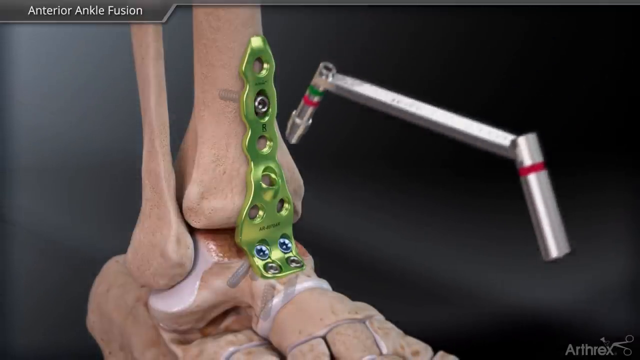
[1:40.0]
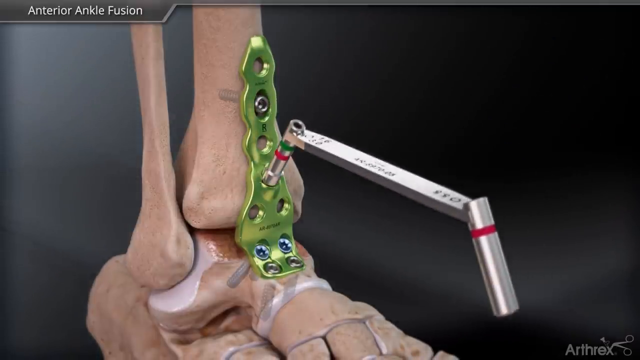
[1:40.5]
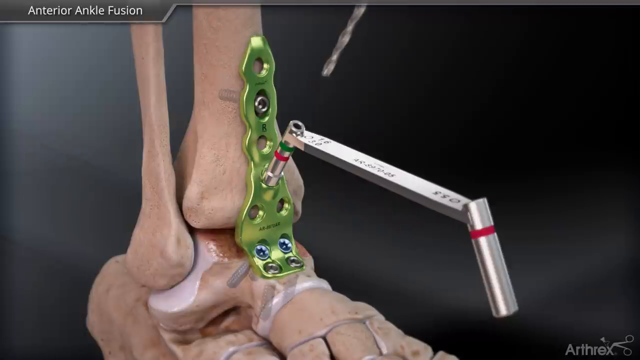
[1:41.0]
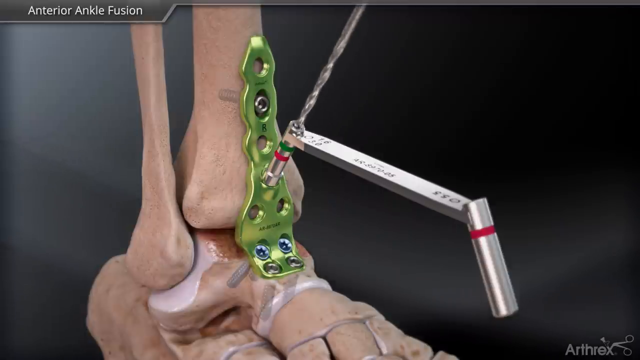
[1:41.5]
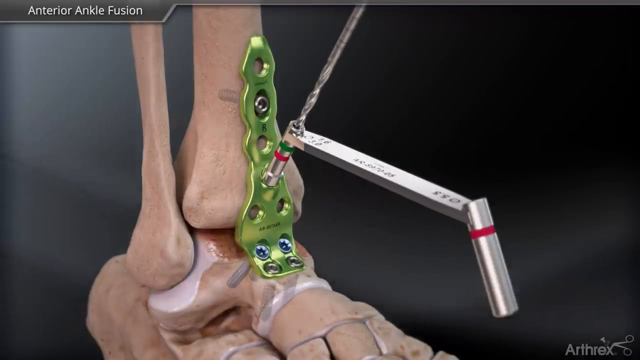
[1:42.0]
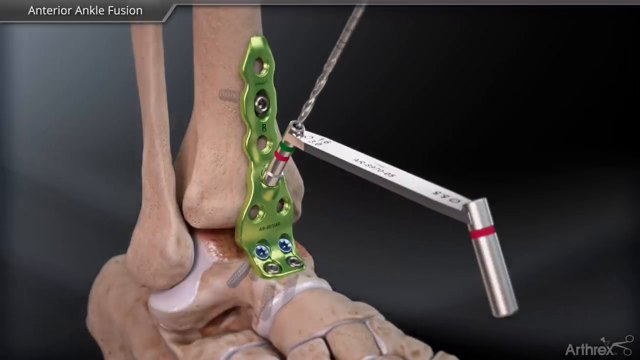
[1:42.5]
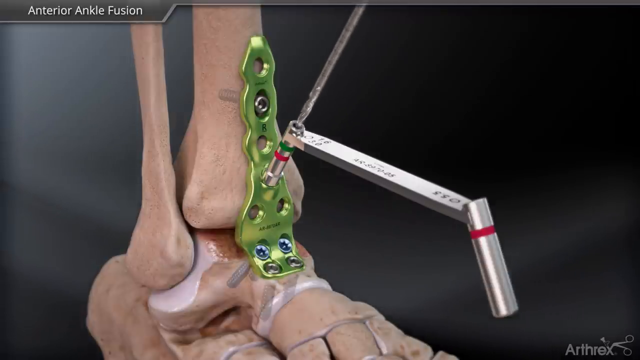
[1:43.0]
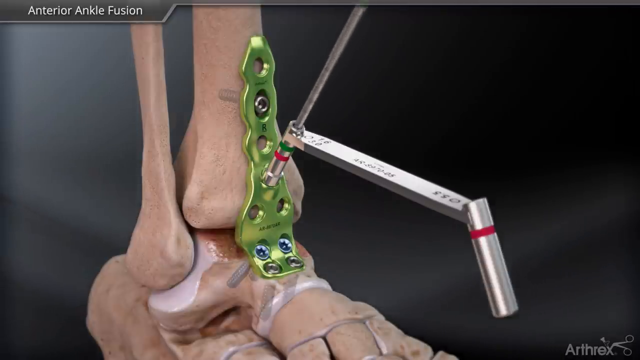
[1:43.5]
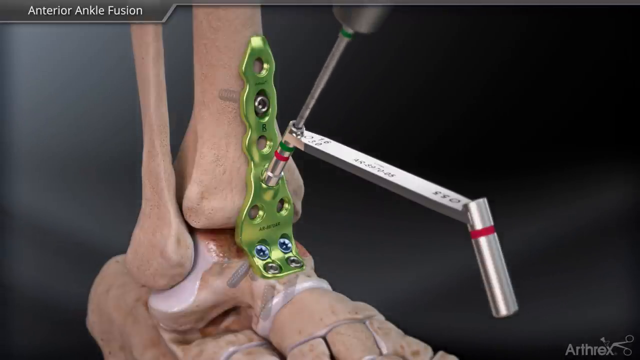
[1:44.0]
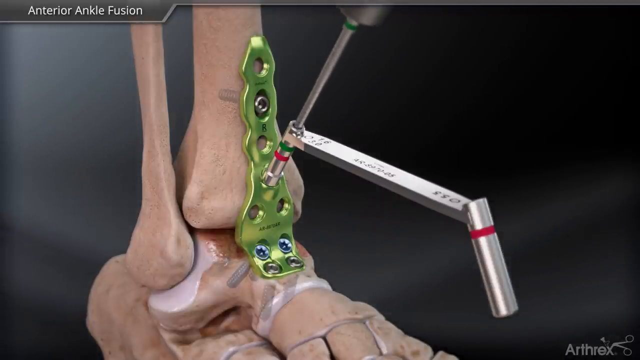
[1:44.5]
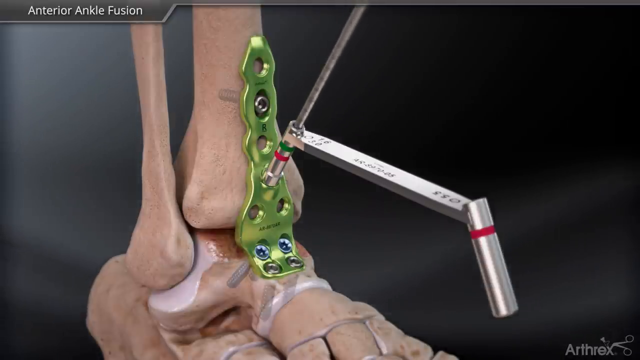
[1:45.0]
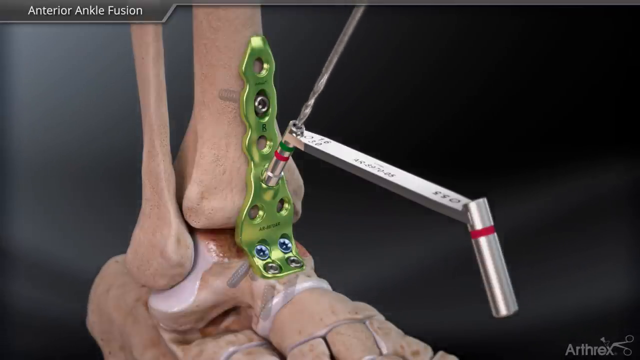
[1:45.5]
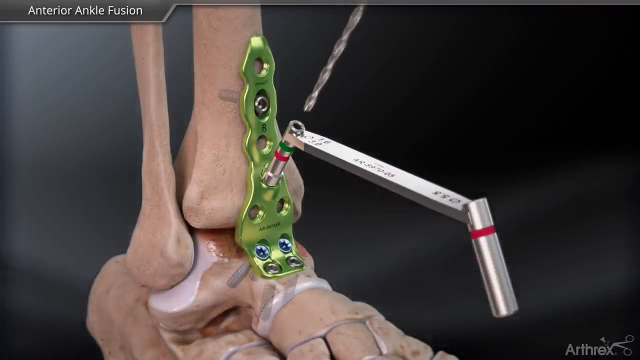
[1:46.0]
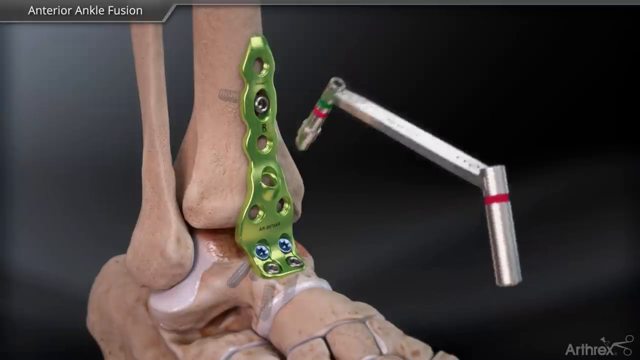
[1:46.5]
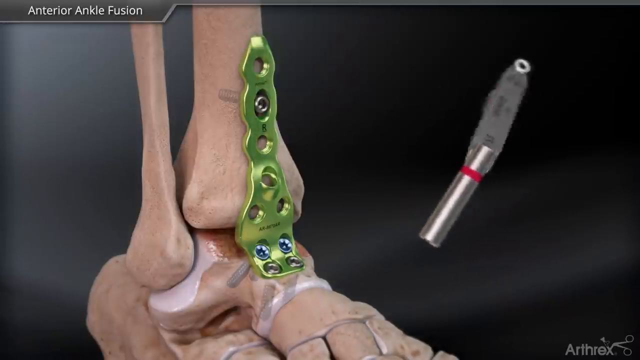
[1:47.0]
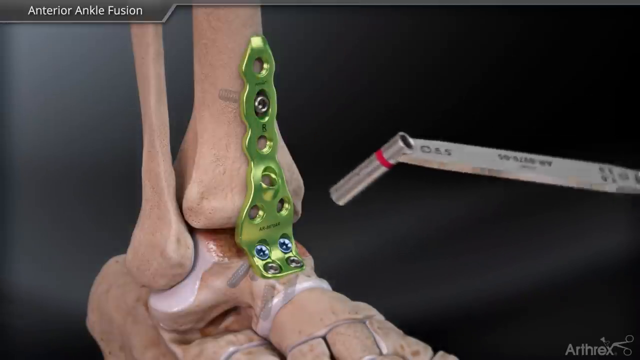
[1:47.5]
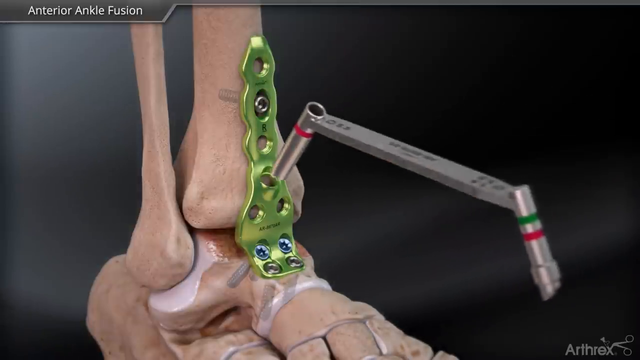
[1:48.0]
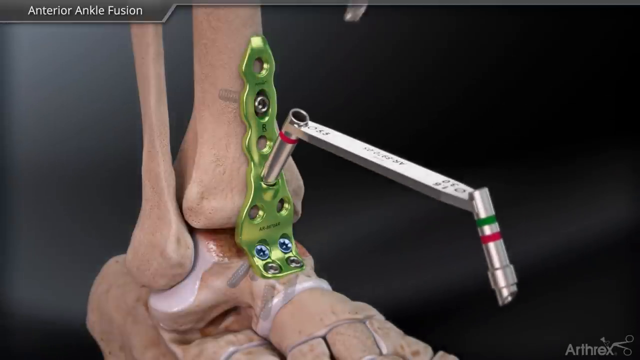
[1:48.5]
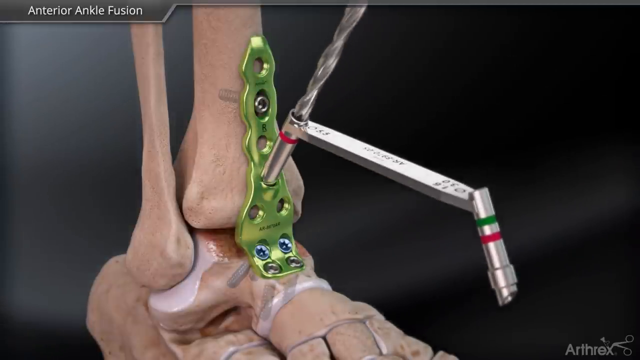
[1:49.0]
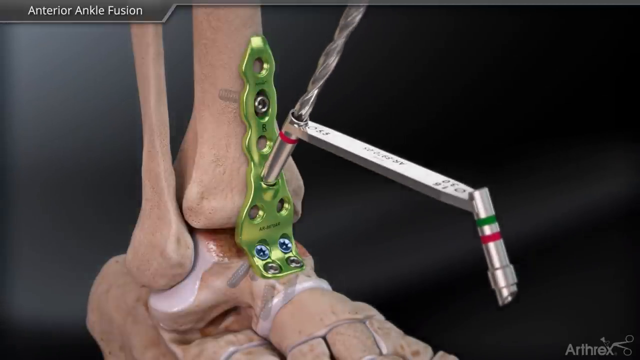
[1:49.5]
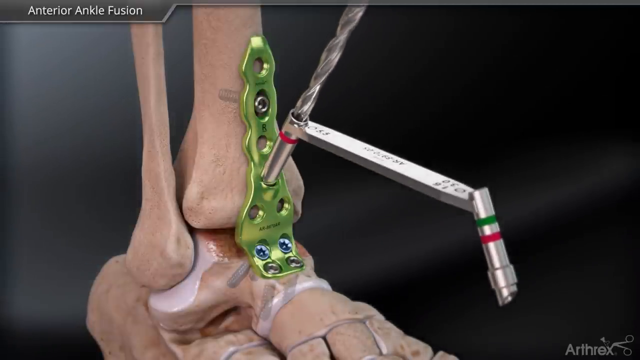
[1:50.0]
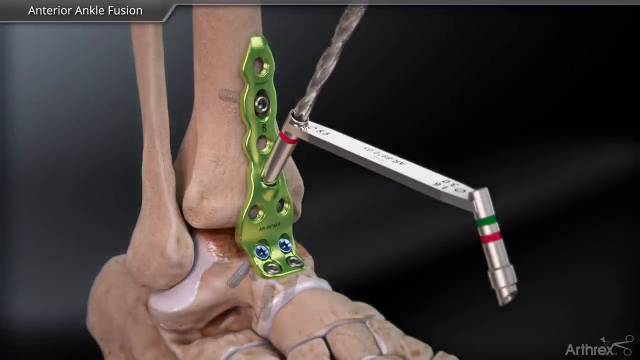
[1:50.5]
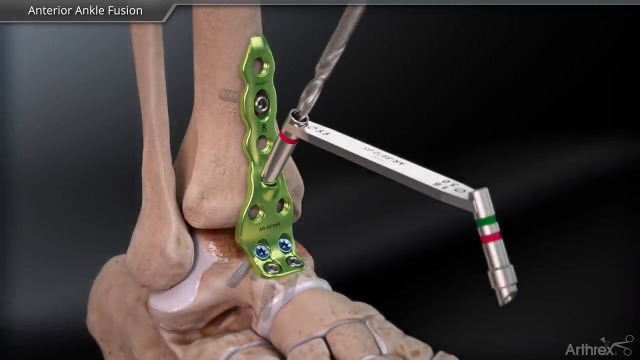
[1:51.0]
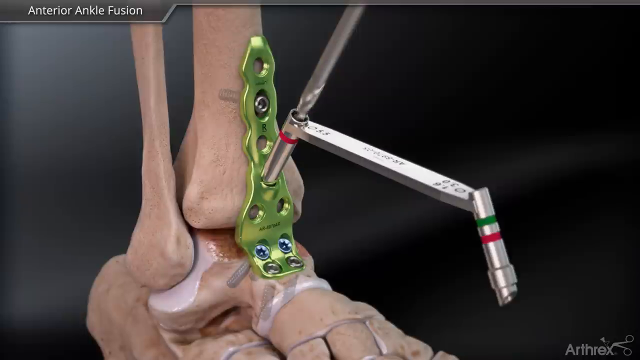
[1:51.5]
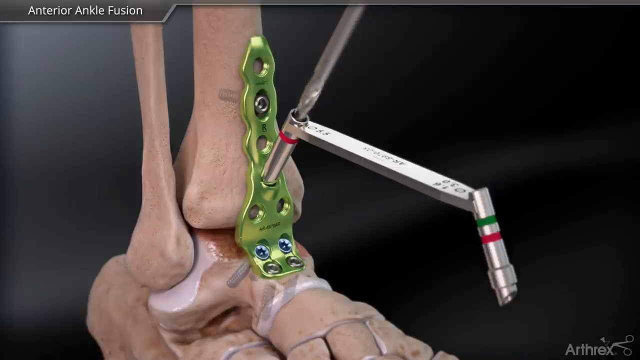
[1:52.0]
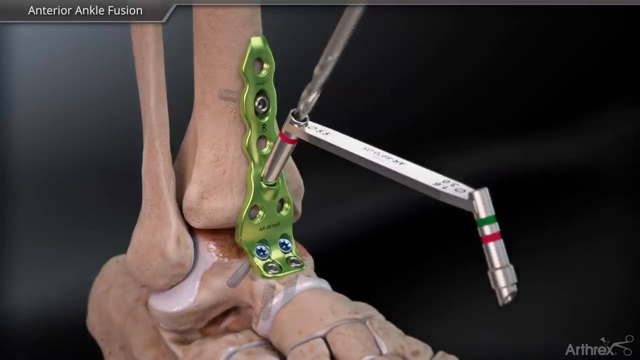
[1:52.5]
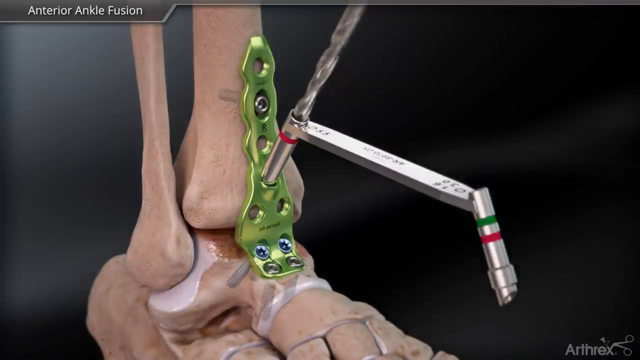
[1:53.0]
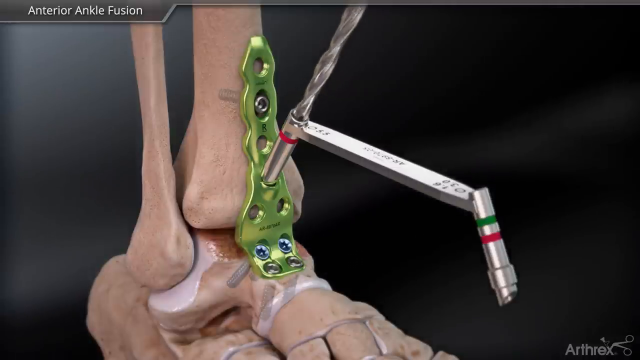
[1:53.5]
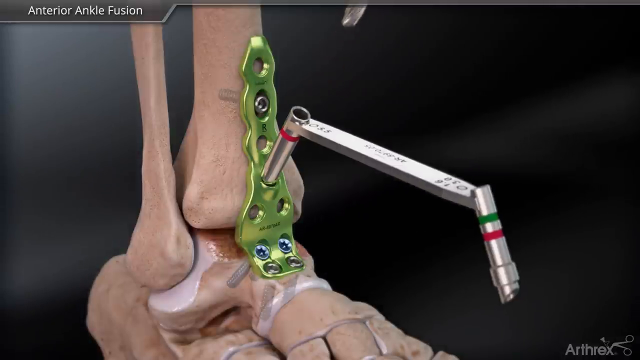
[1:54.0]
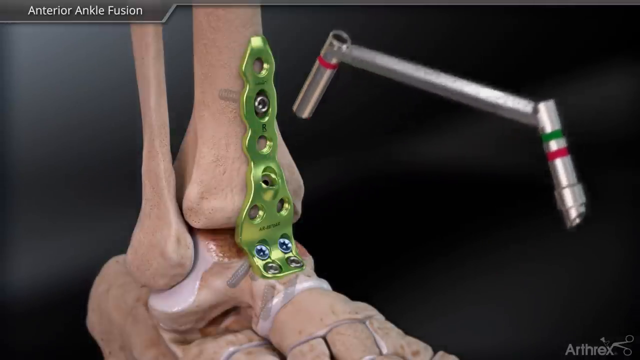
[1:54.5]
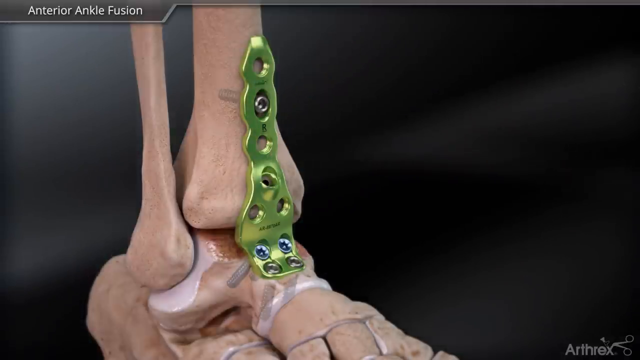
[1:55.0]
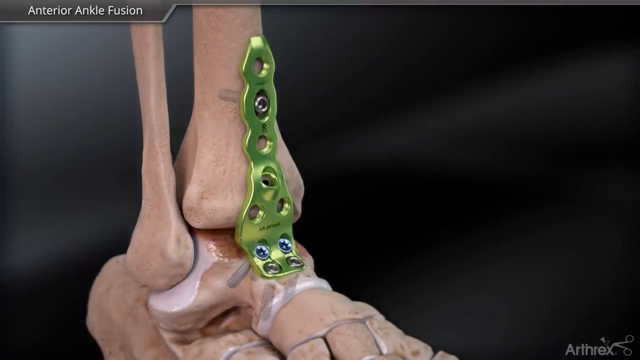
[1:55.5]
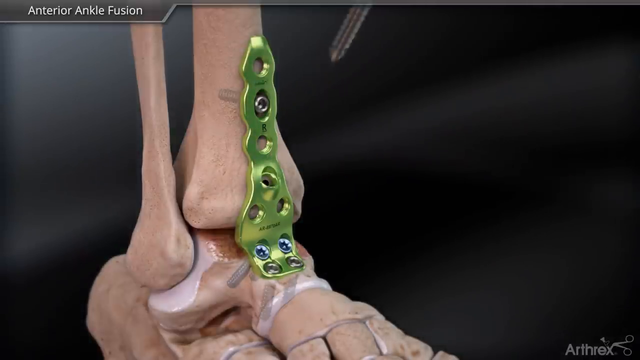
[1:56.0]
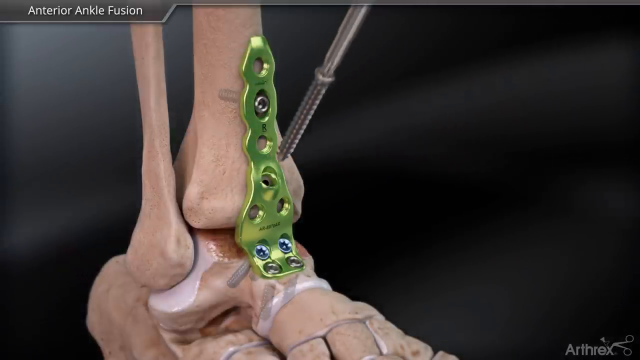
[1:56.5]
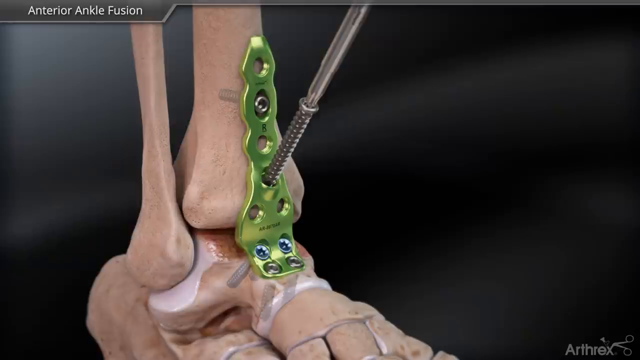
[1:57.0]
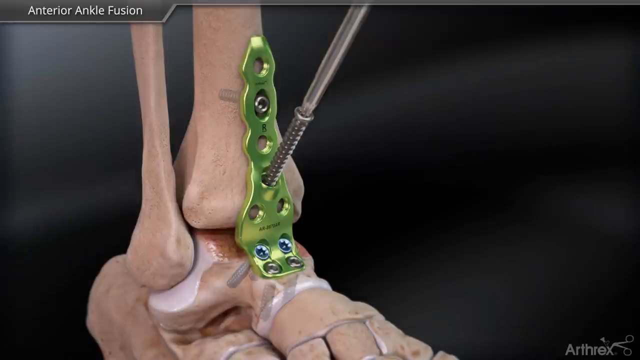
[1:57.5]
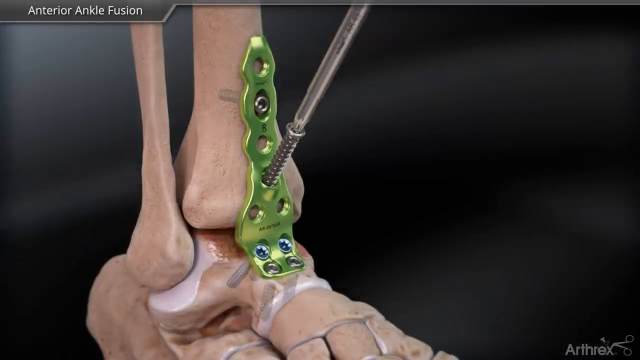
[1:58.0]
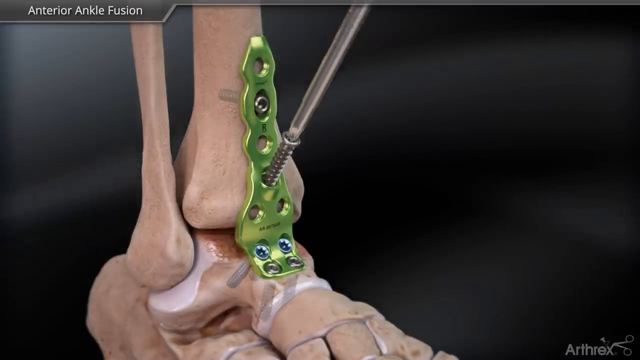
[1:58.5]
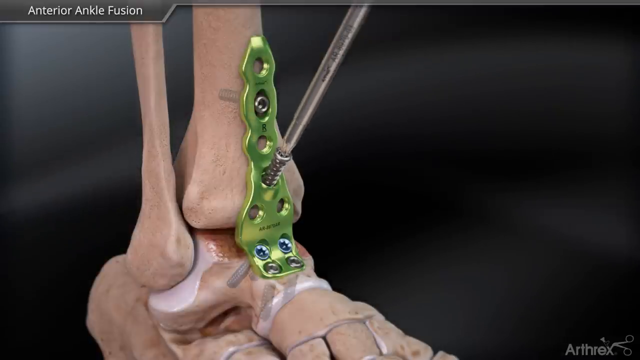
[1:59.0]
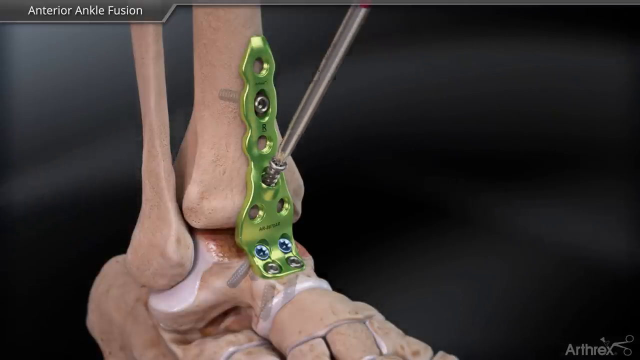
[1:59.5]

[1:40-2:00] The stabilization instrument is inserted into the fourth hole from the top; it seems a section is being skipped, with a screw going into every other hole. Again, the large drill bit is inserted inside the tool that helps stabilize it, through the bracket and into the bone behind it. The tool is then flipped around and a bigger drill bit goes into the bone to make the hole bigger for the next screw. The hole left by the drill is visible, and the screw is inserted into the top of it, again screwed counterclockwise, with the back of the screw going into the bone behind it. The stabilization device is mostly silver, with two red rings on the front and back, and a green ring under the red ring on the front.